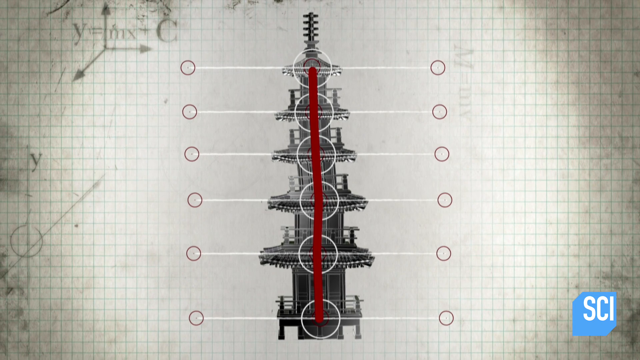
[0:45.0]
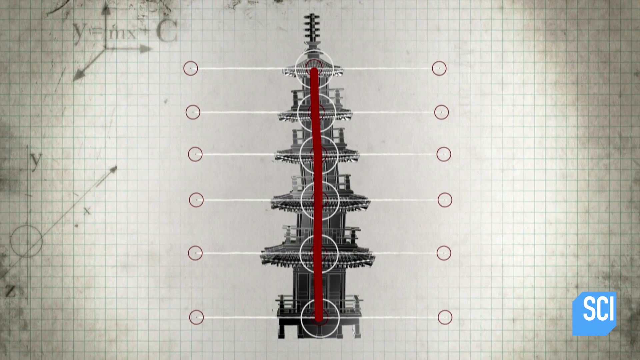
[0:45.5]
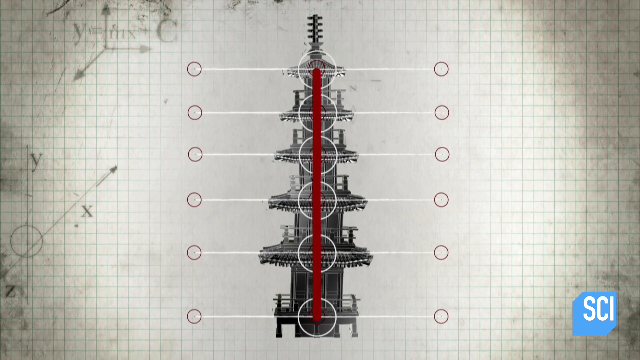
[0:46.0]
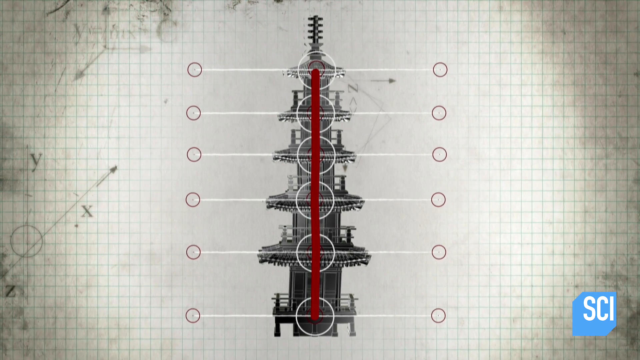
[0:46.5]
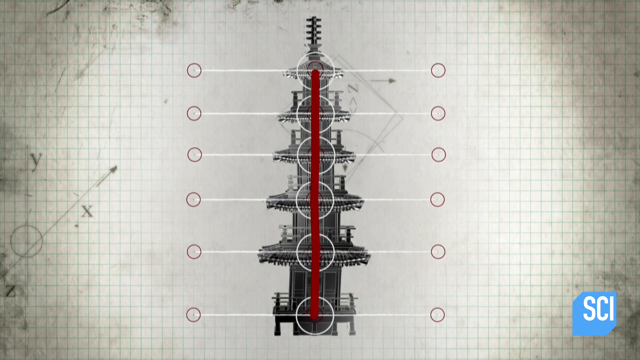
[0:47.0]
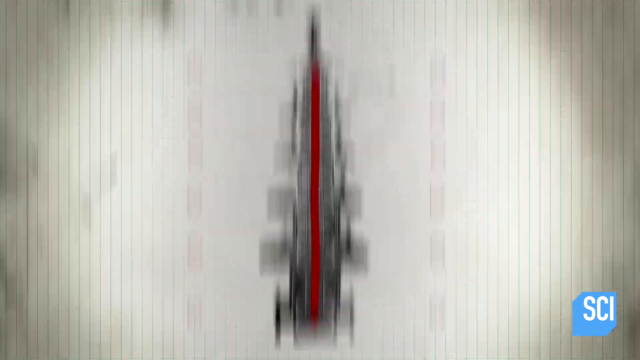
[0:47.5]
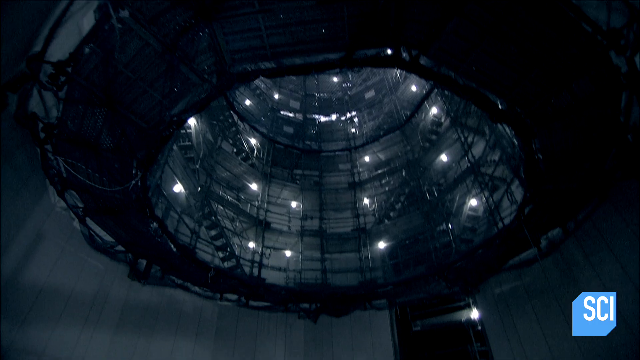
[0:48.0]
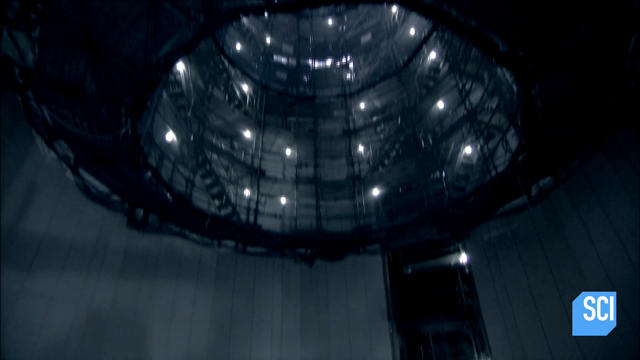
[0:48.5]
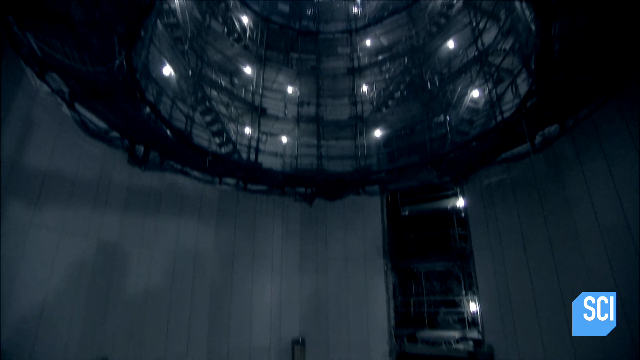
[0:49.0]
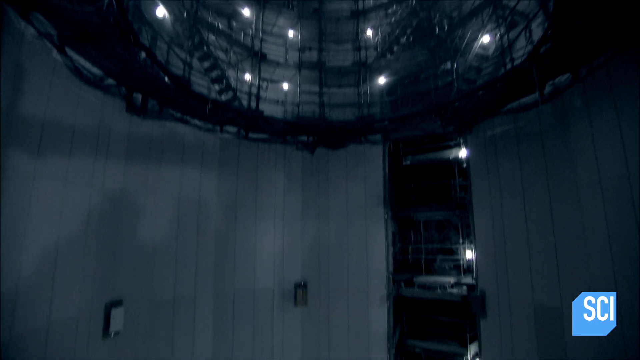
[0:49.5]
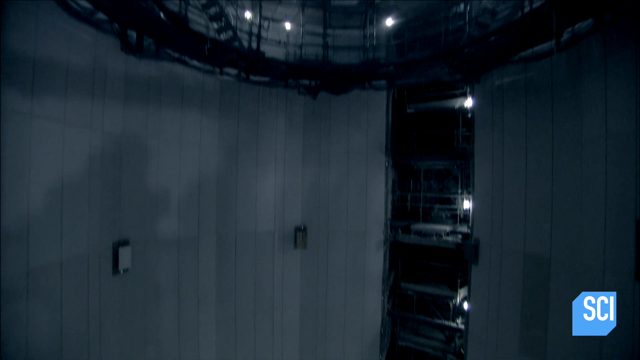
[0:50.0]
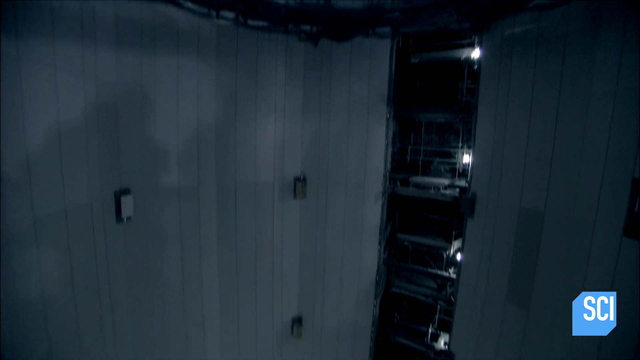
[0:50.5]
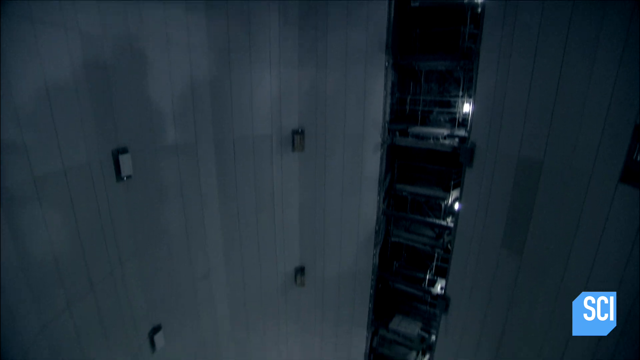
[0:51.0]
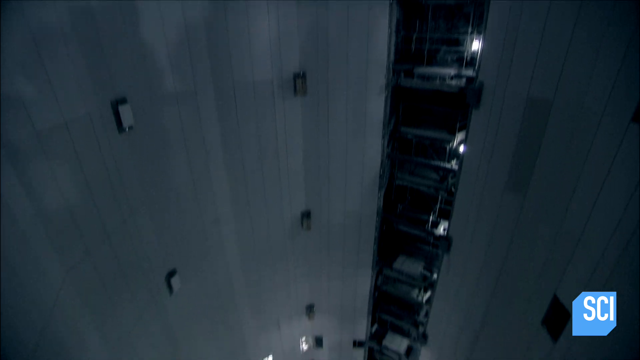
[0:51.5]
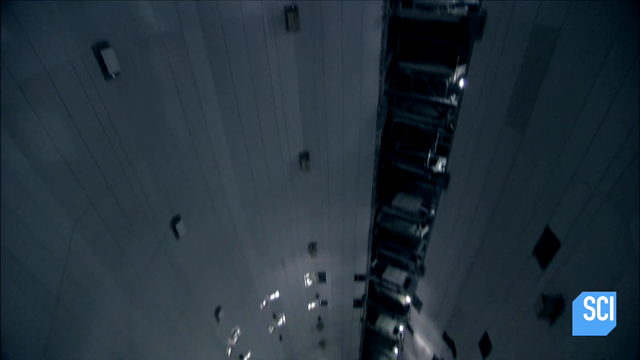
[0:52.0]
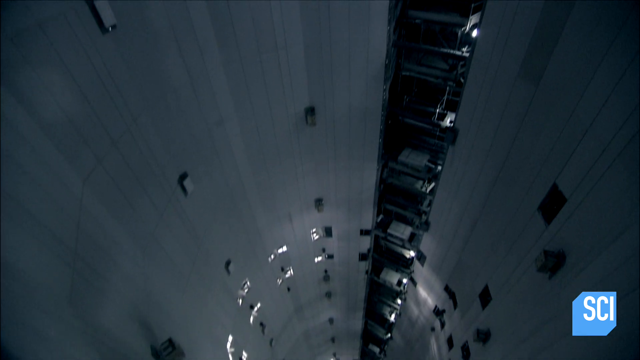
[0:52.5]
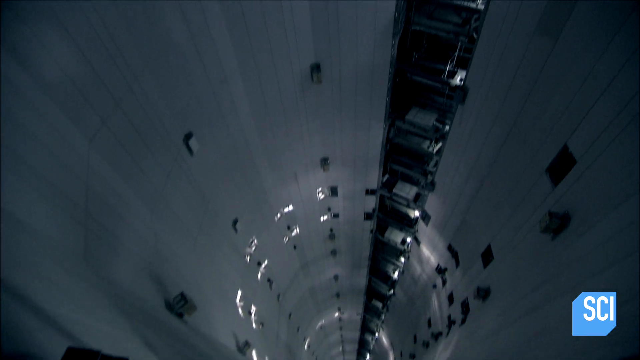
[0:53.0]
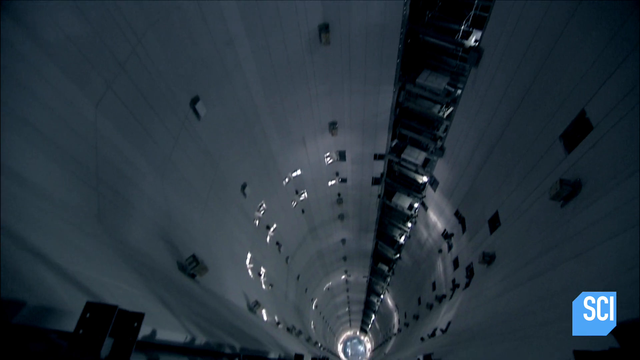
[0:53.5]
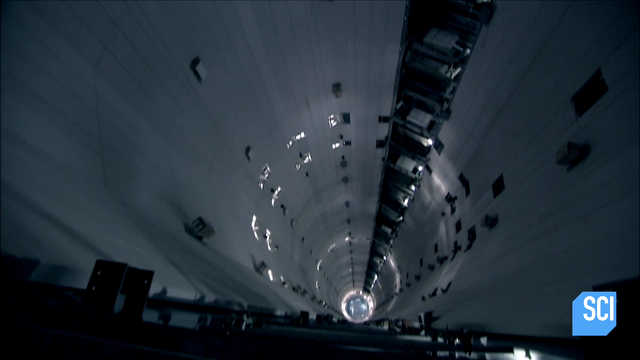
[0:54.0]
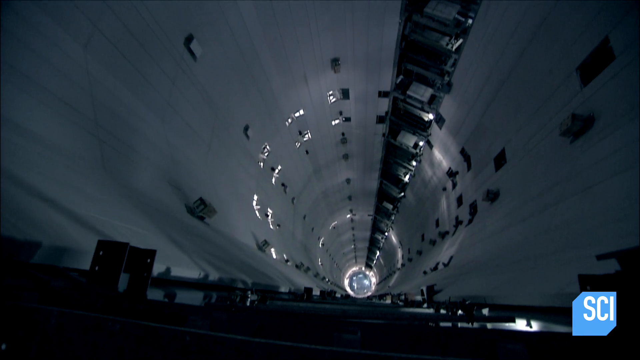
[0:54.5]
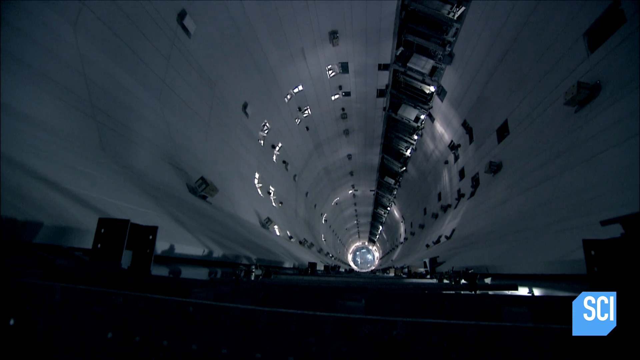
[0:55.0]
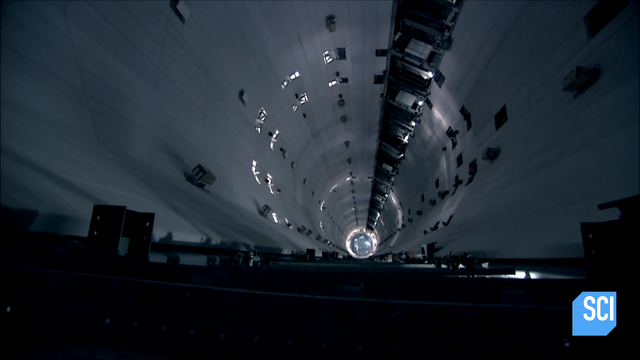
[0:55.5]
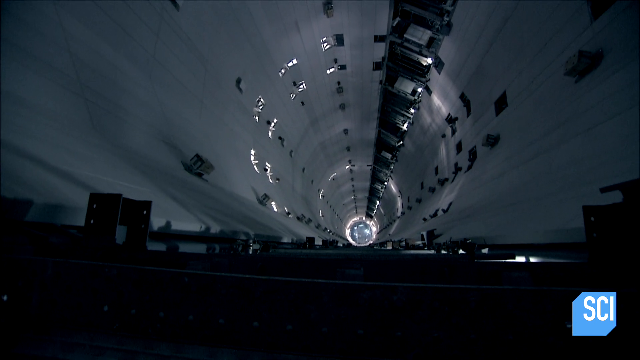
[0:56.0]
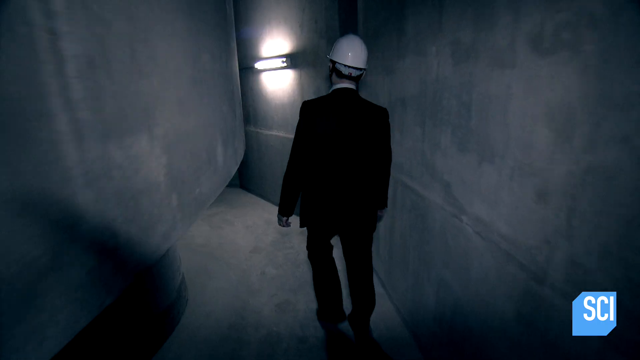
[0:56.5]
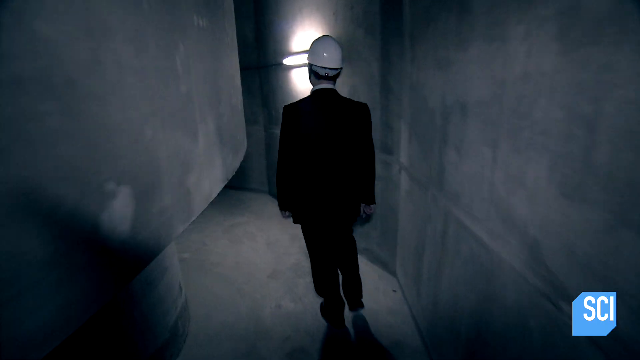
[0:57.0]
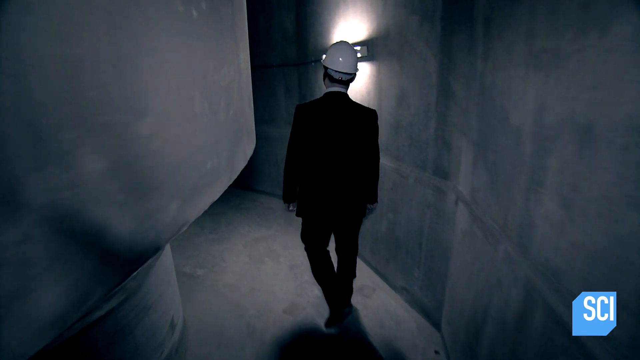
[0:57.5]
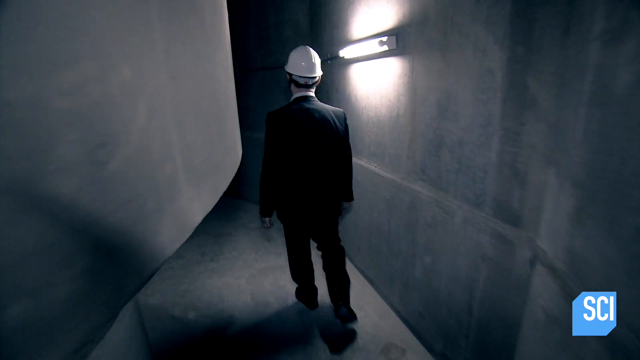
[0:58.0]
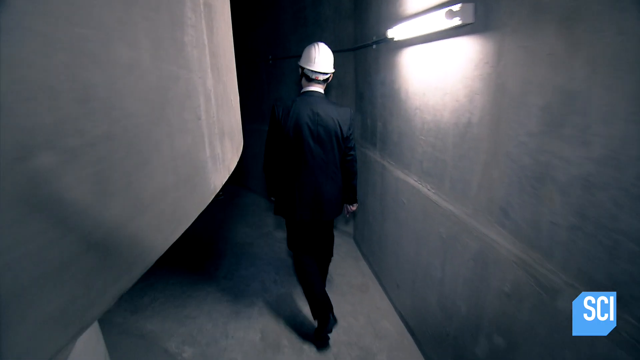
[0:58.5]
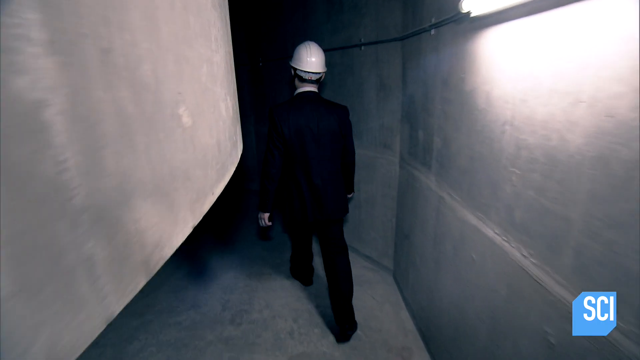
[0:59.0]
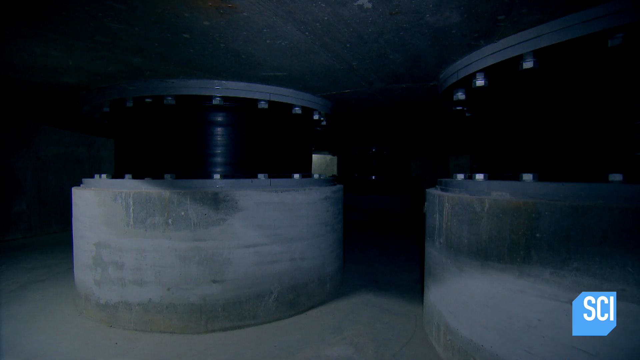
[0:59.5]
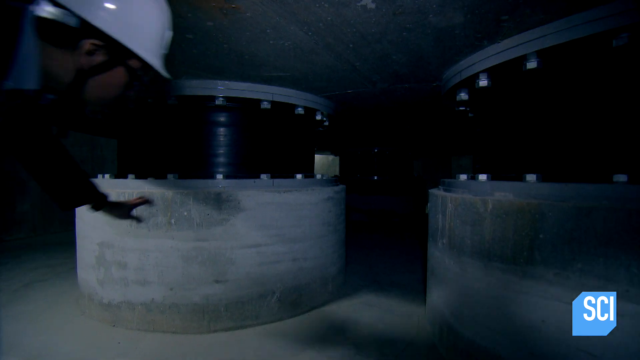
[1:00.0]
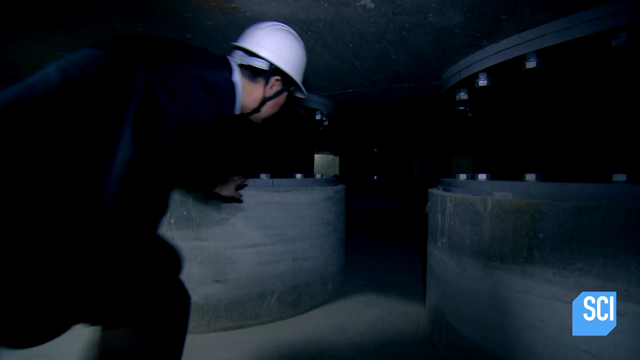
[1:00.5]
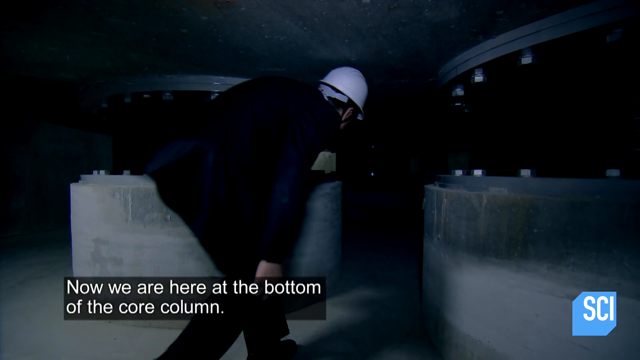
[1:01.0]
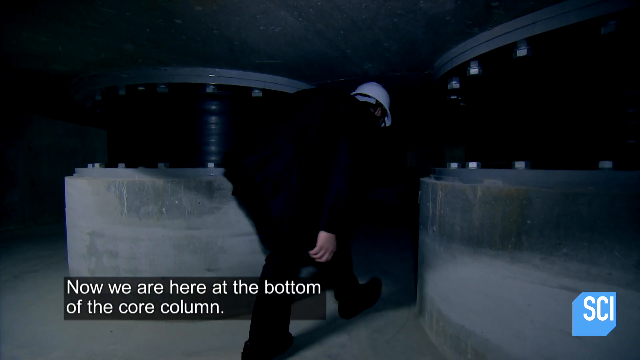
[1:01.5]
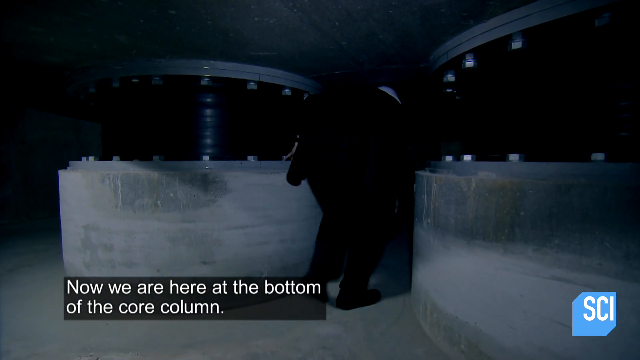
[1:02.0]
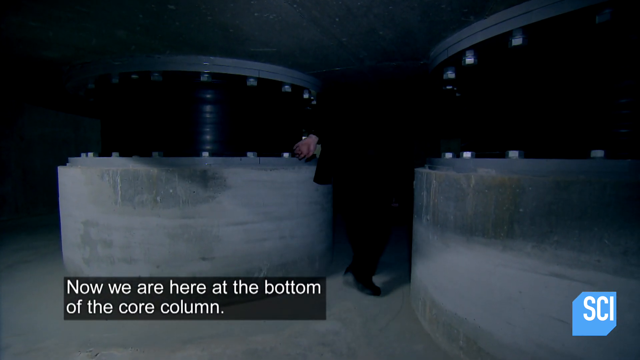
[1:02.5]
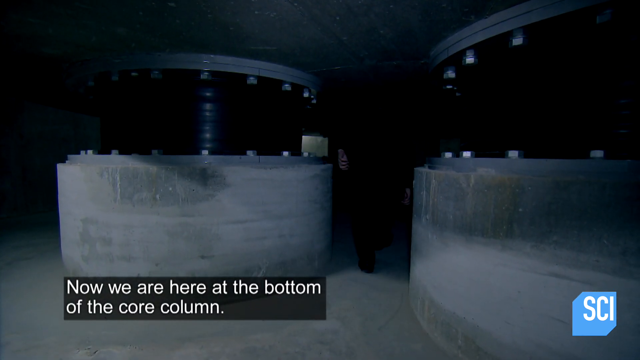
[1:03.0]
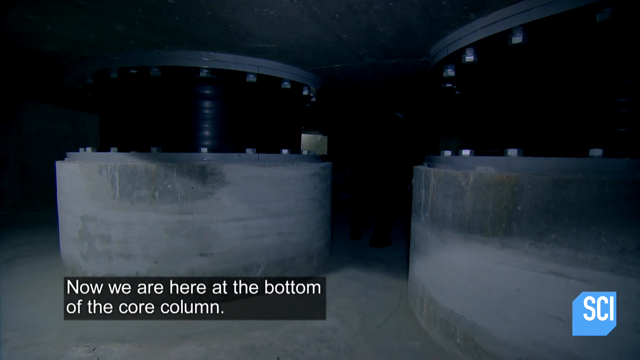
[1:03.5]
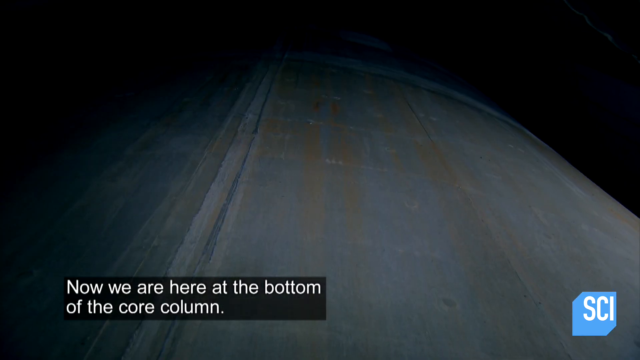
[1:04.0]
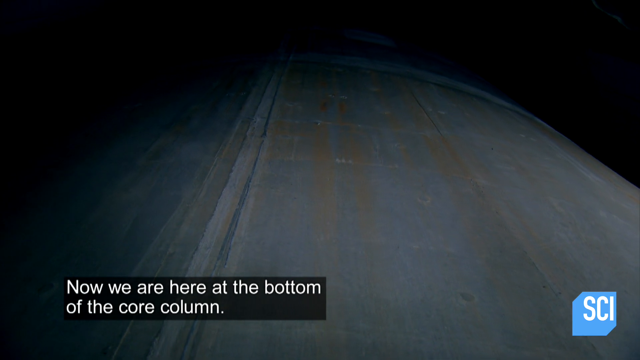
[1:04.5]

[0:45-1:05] The view moves inside the structure, which appears hollow inside and could possibly be an area a rocket ship takes off from. A person, possibly an engineer, walks through the site. There are aerial shots from below and from above, and he crawls underneath the bottom core column, giving an inside perspective of the location, its size and the concrete used to build it.